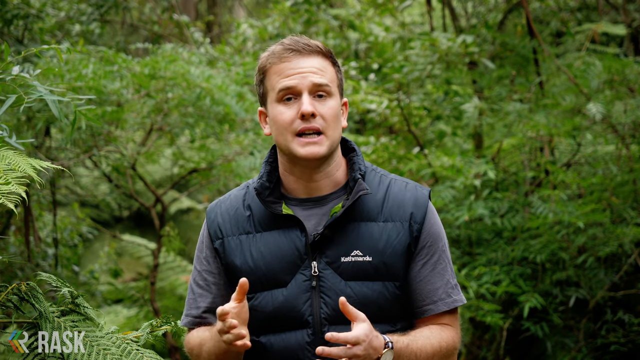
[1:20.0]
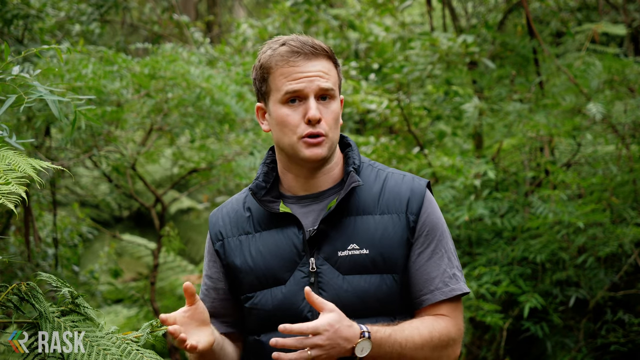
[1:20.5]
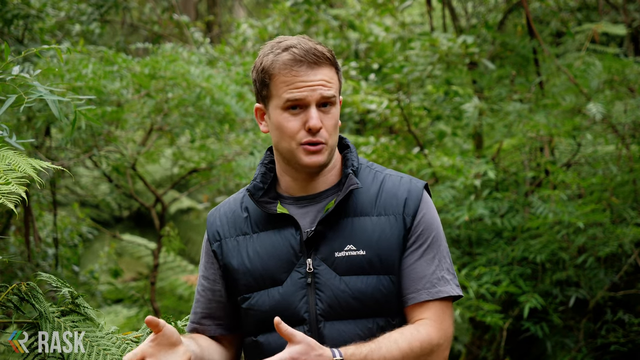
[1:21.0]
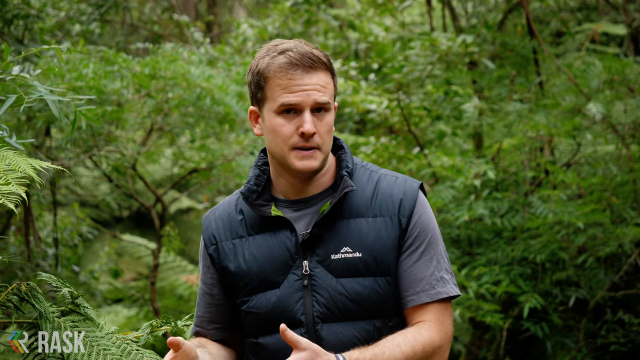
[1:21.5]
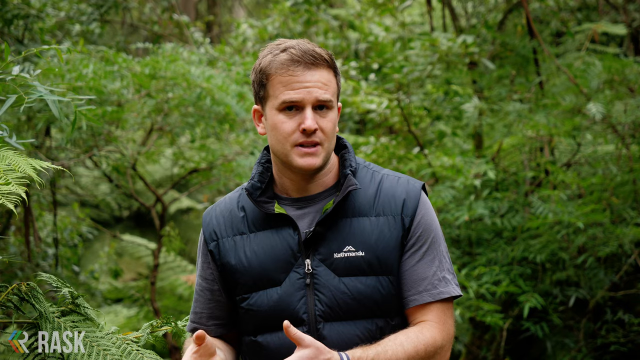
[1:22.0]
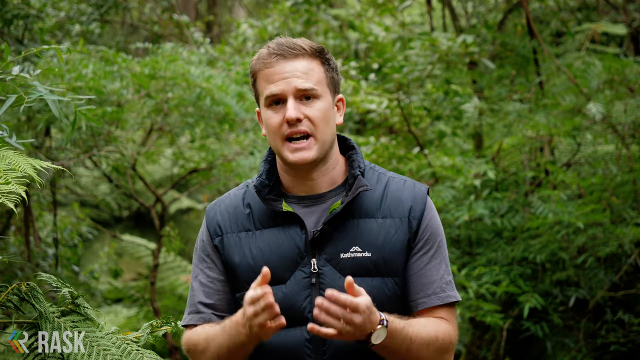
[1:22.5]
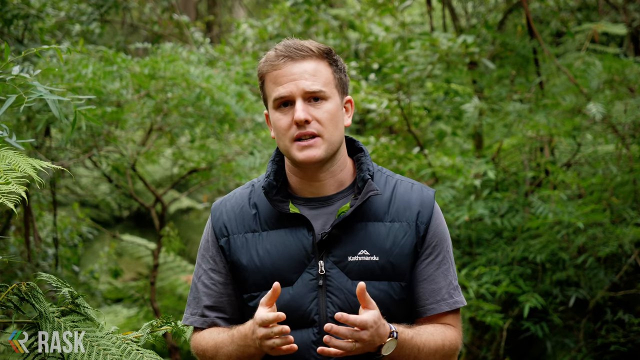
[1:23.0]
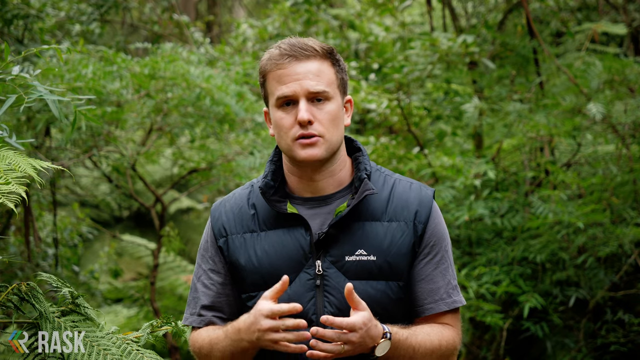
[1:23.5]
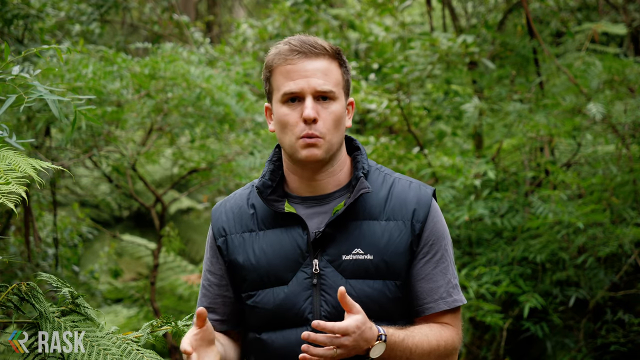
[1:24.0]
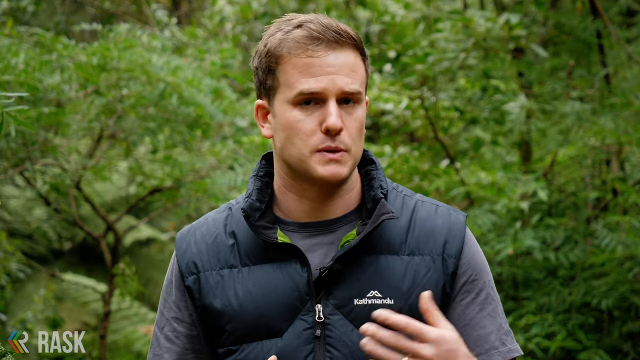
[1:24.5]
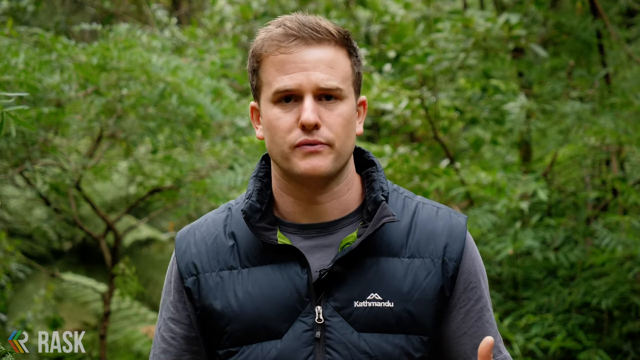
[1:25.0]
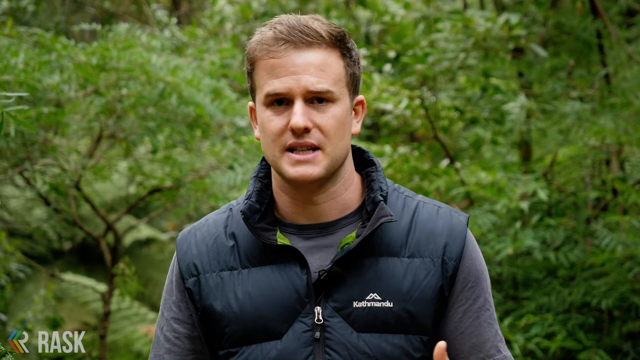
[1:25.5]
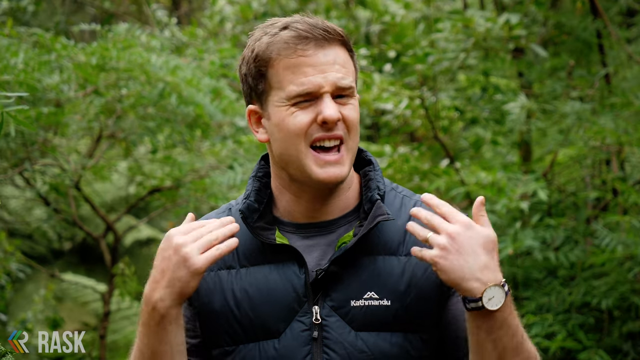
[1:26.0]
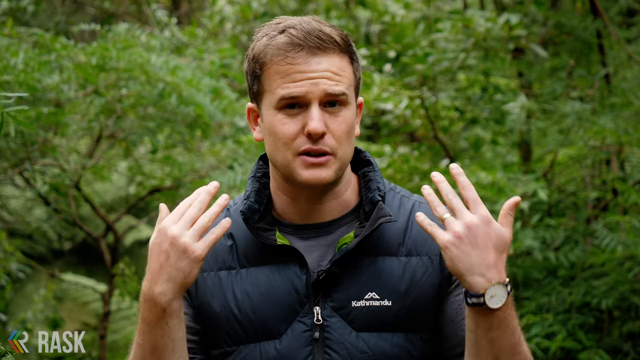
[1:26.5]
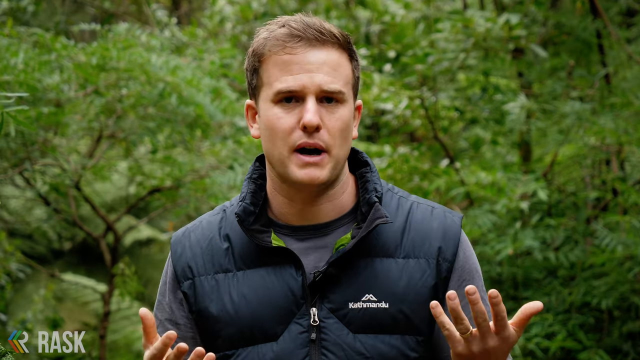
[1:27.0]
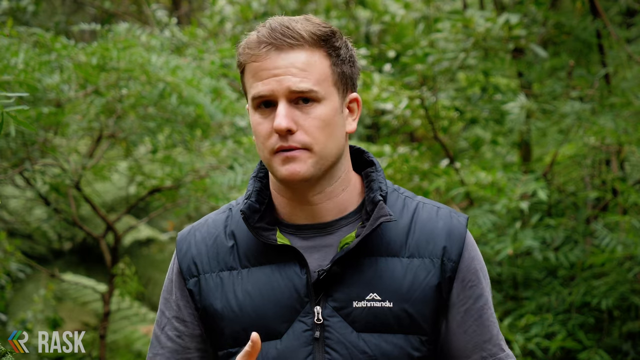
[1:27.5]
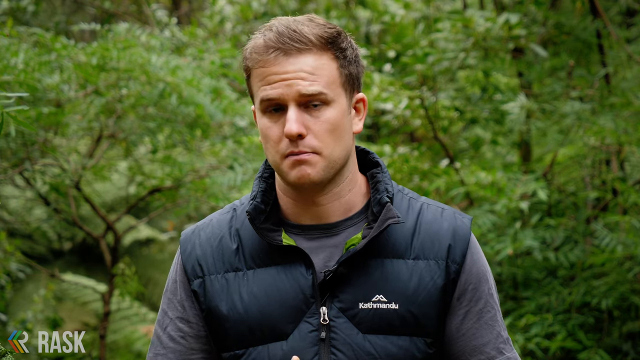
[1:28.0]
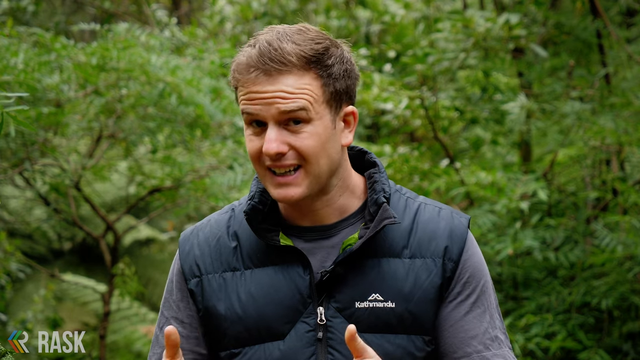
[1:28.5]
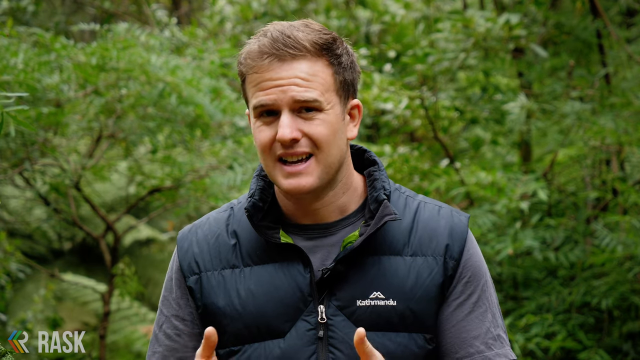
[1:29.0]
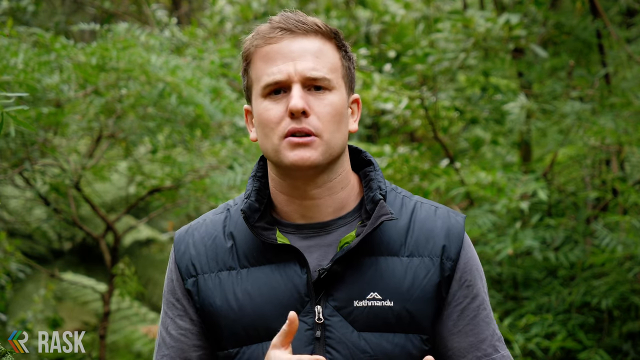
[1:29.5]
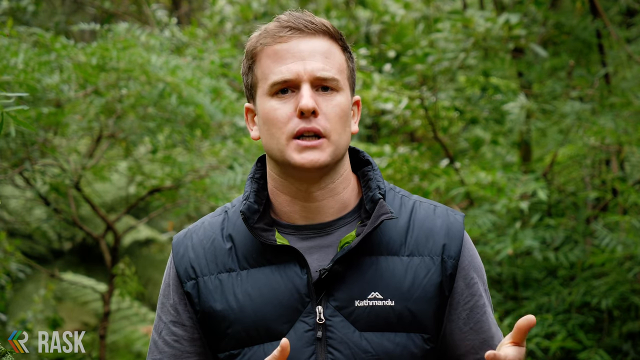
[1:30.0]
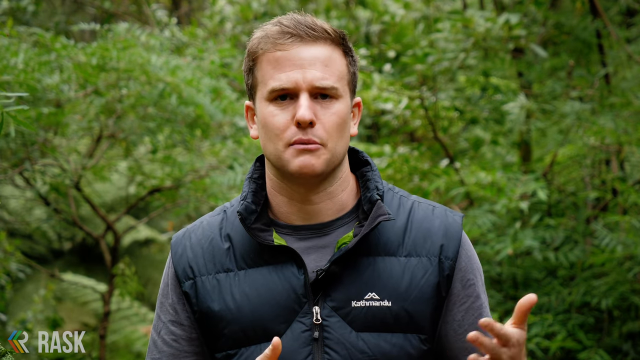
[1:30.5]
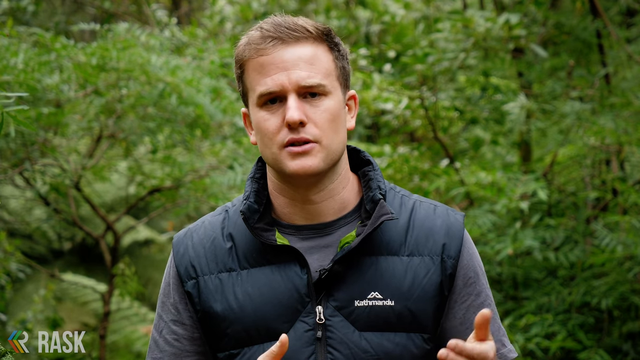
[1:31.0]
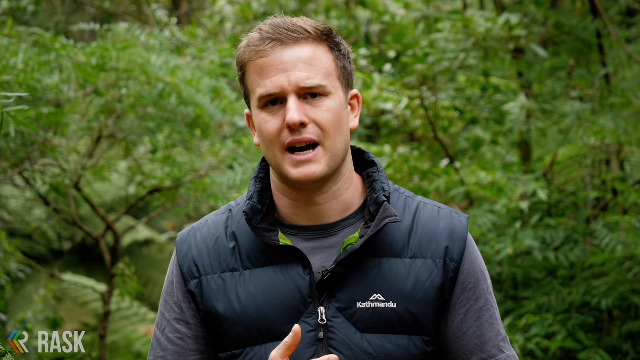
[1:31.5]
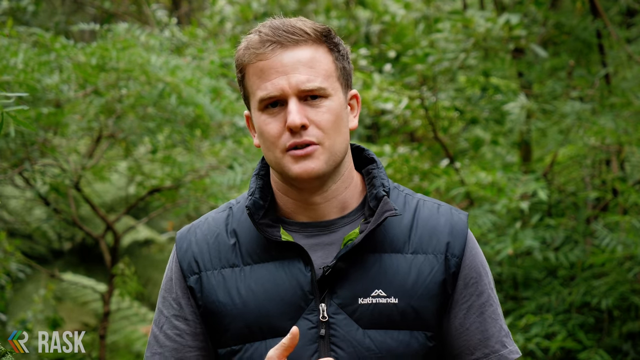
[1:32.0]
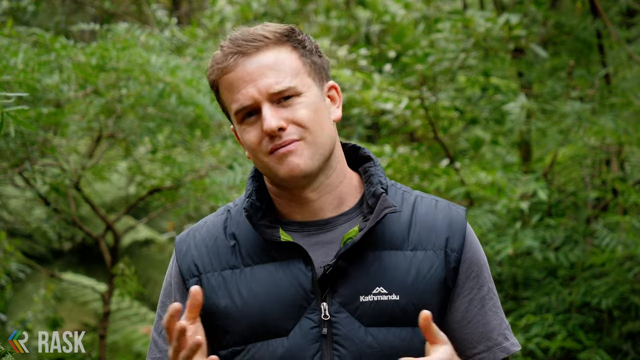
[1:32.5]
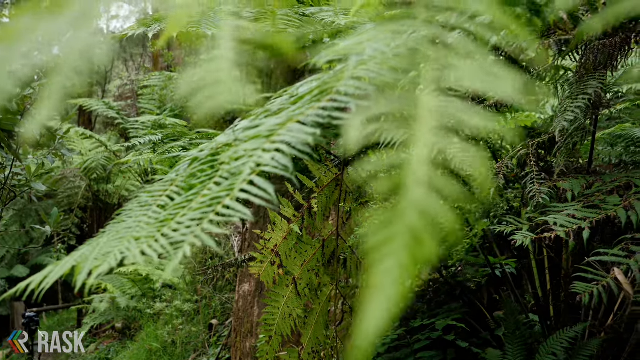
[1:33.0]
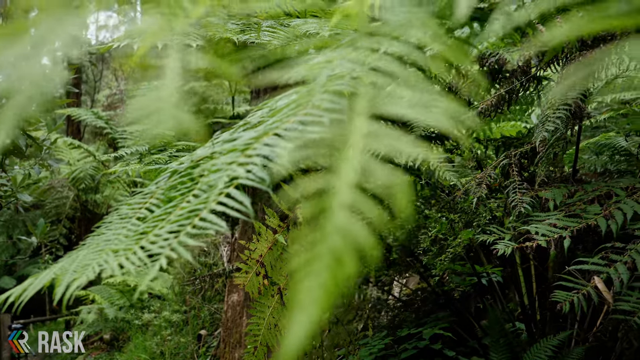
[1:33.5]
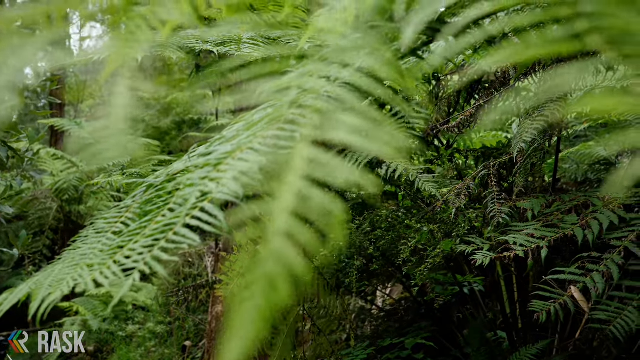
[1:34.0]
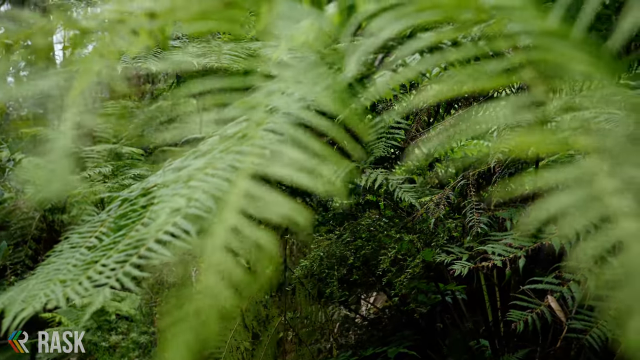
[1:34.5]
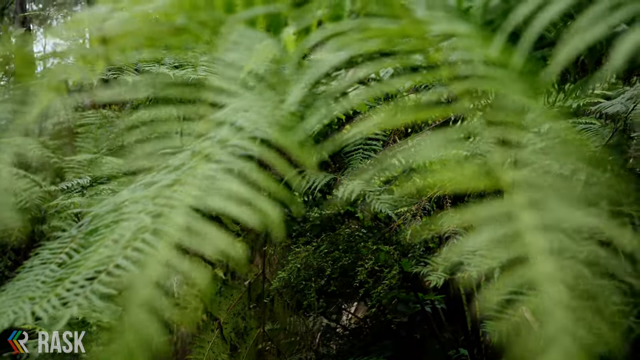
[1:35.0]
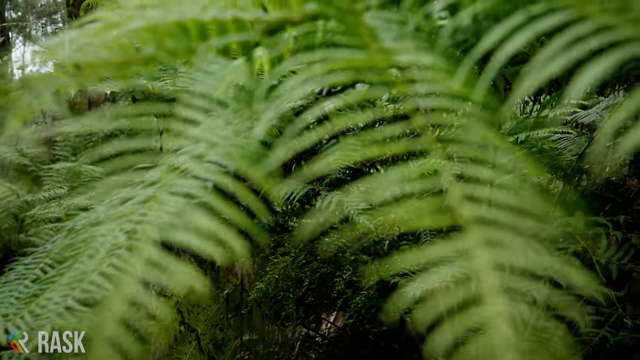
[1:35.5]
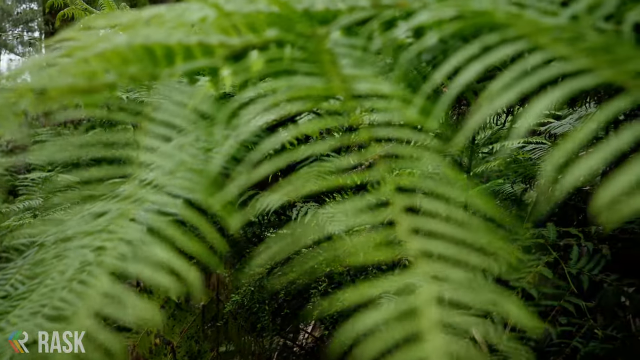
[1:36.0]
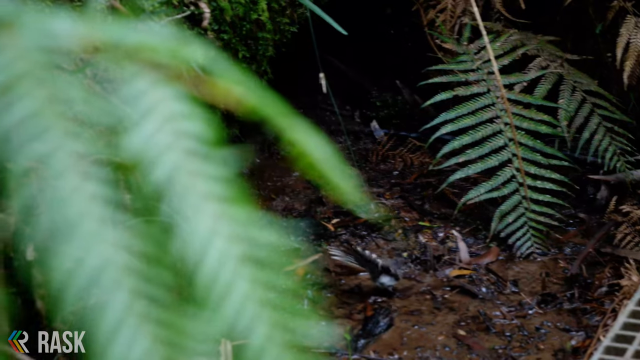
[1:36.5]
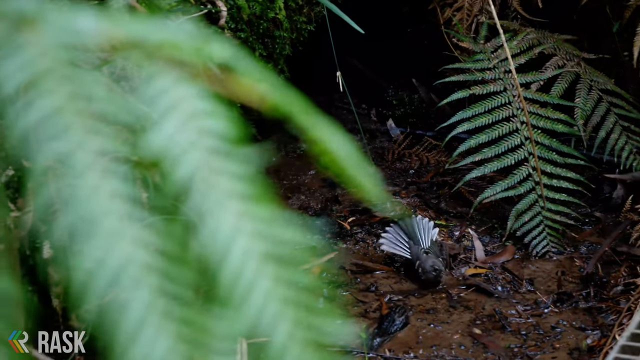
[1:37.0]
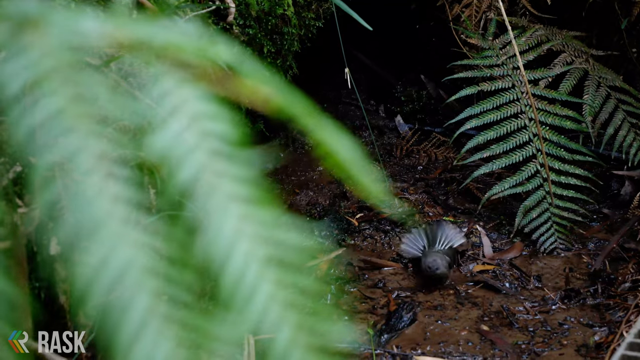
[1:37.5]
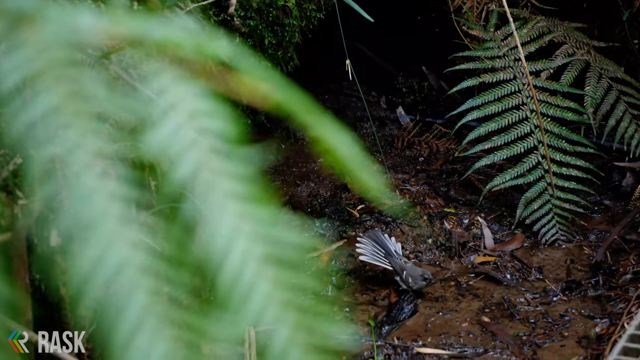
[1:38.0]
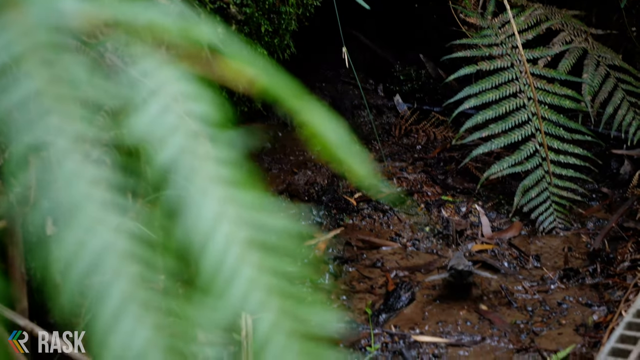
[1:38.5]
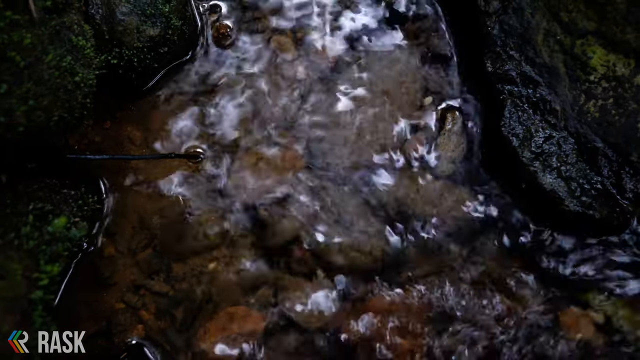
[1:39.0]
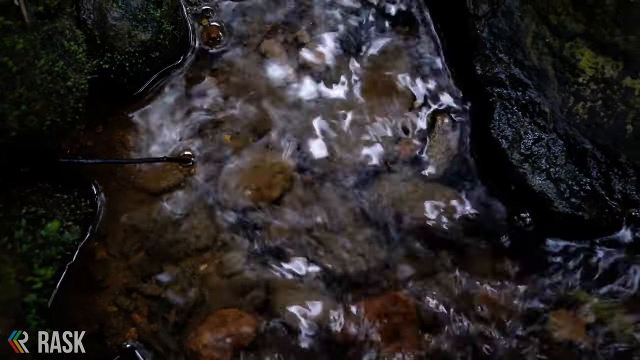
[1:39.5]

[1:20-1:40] The investment coach is speaking. Then the scene changes to a bird with ash-coloured feathers and its wings spread, moving from one point to another. The bird is going towards a stream, probably to get water. The stream is flowing and its water is clean.